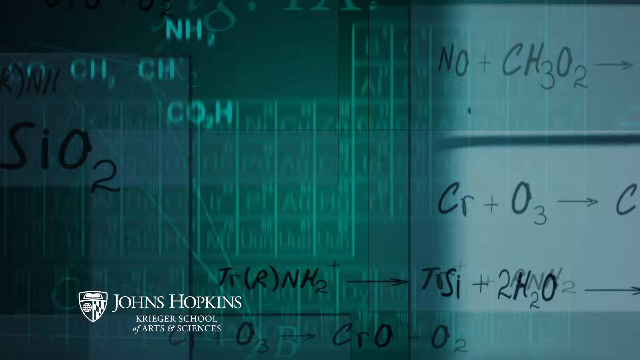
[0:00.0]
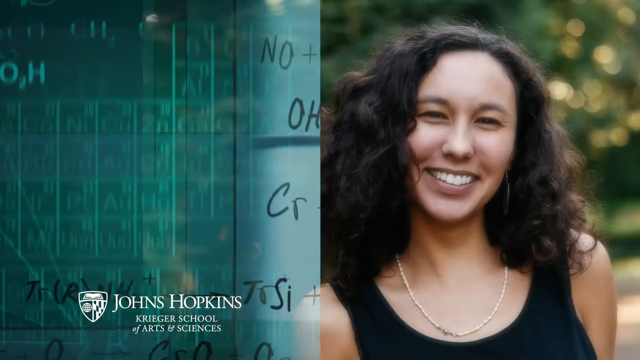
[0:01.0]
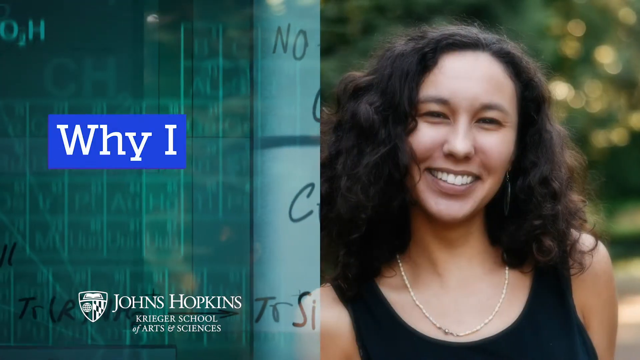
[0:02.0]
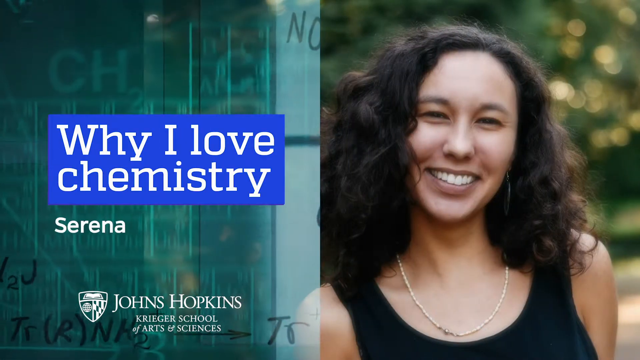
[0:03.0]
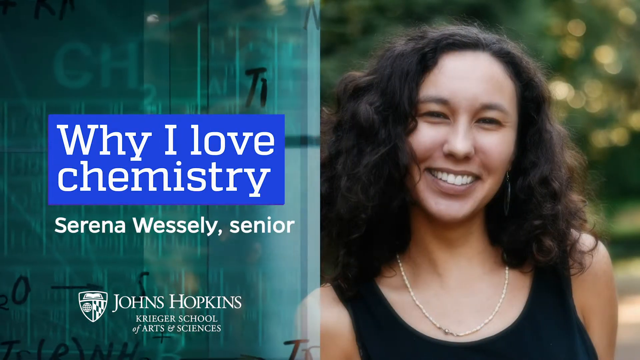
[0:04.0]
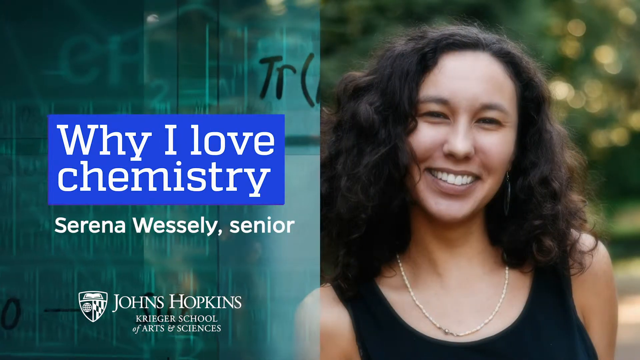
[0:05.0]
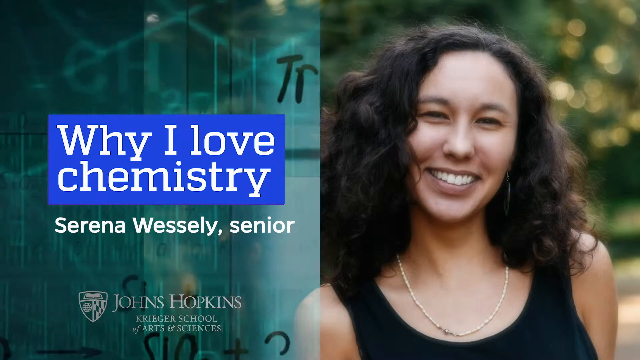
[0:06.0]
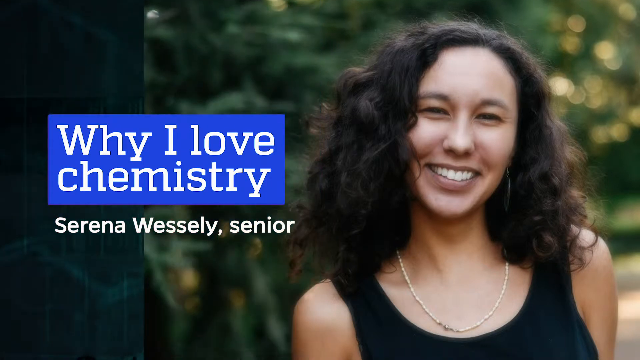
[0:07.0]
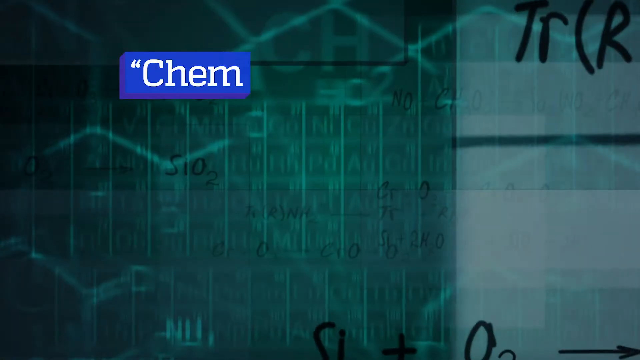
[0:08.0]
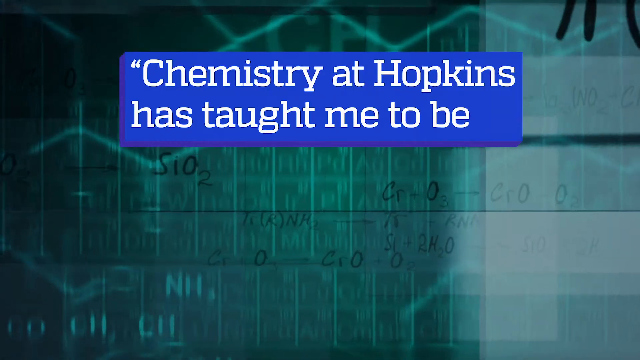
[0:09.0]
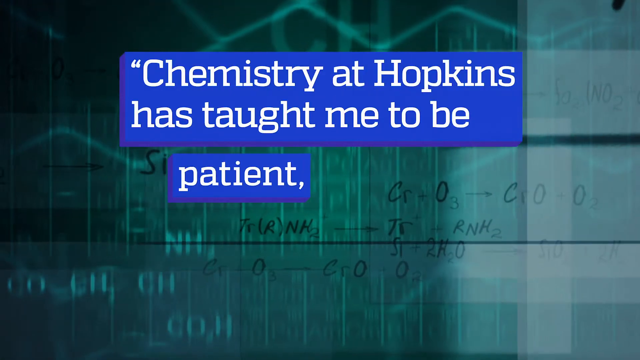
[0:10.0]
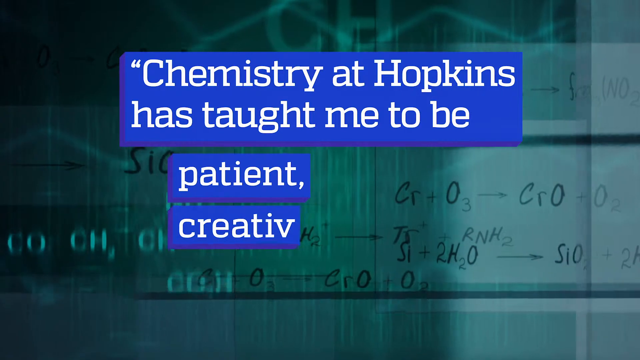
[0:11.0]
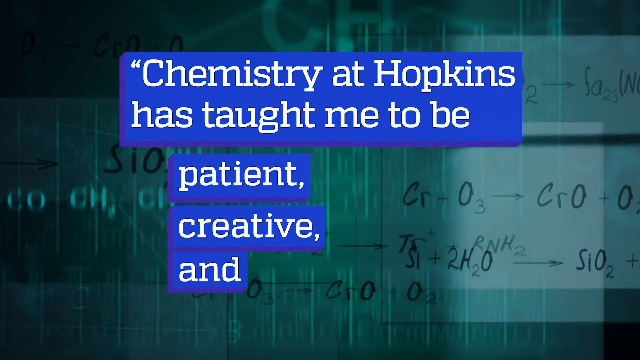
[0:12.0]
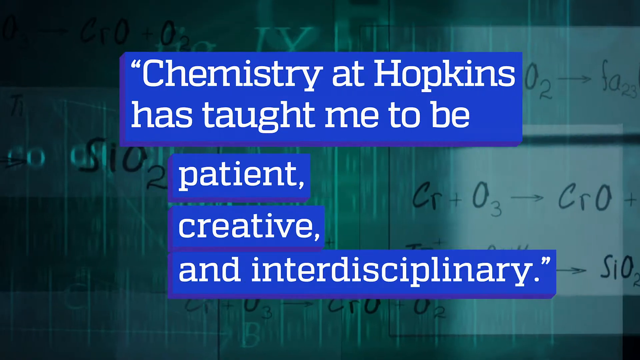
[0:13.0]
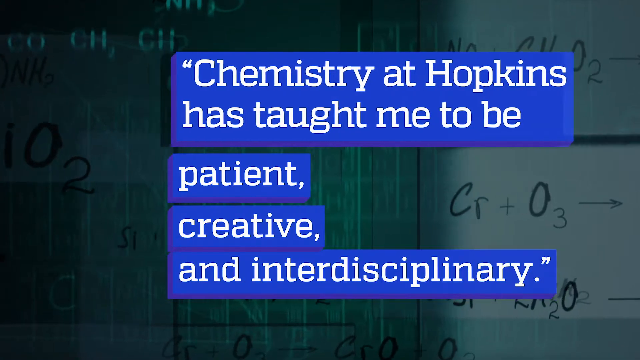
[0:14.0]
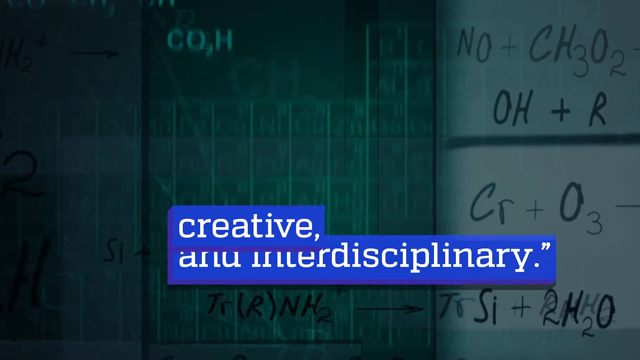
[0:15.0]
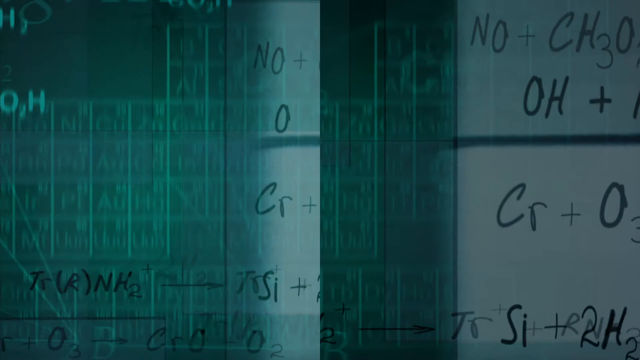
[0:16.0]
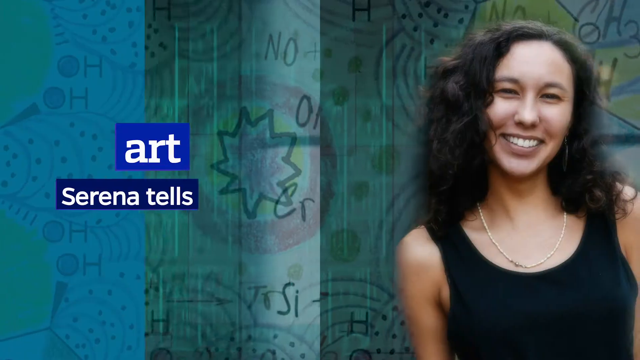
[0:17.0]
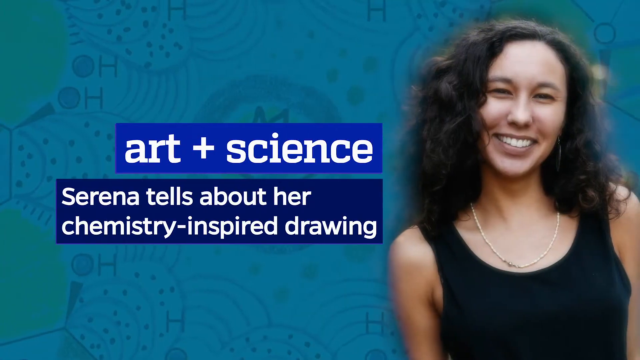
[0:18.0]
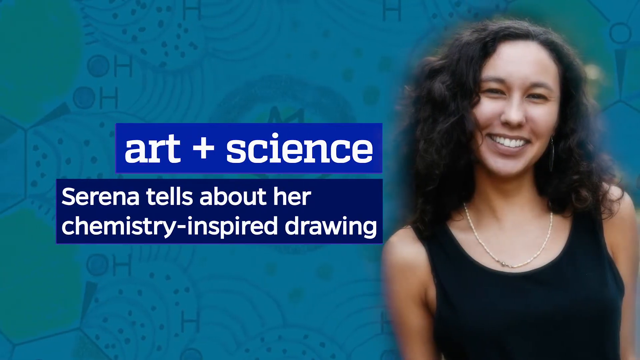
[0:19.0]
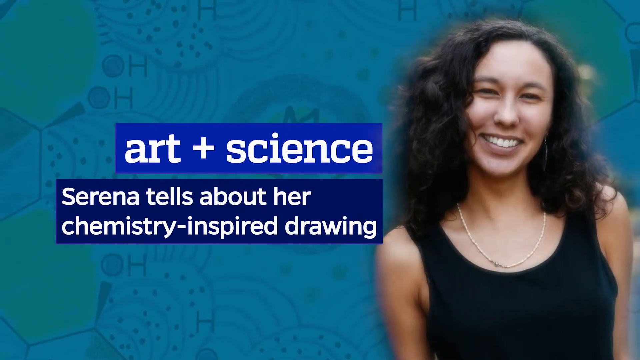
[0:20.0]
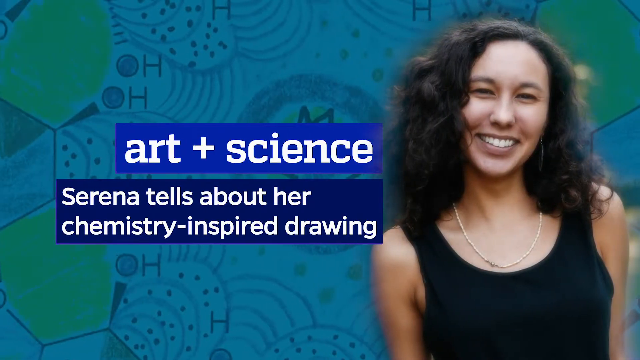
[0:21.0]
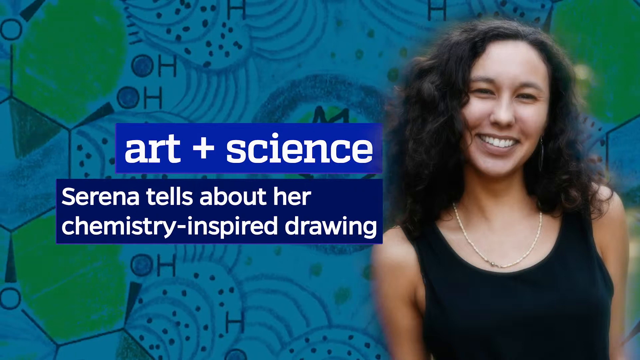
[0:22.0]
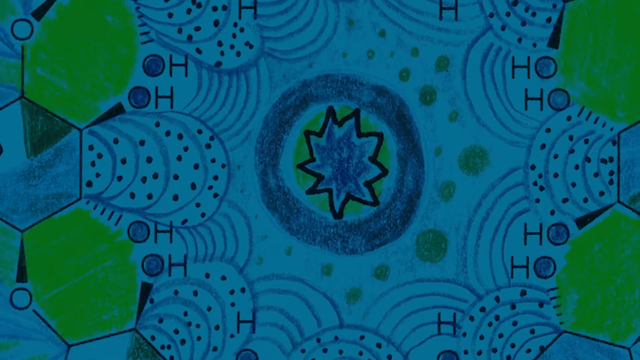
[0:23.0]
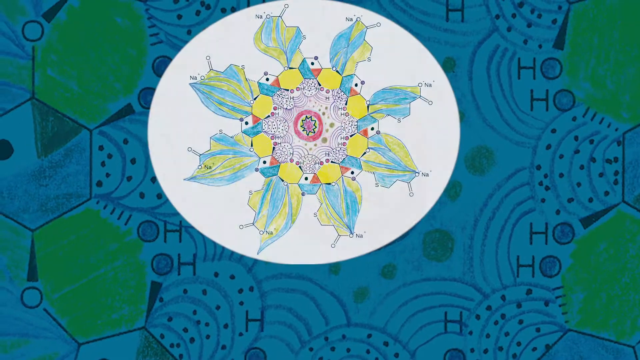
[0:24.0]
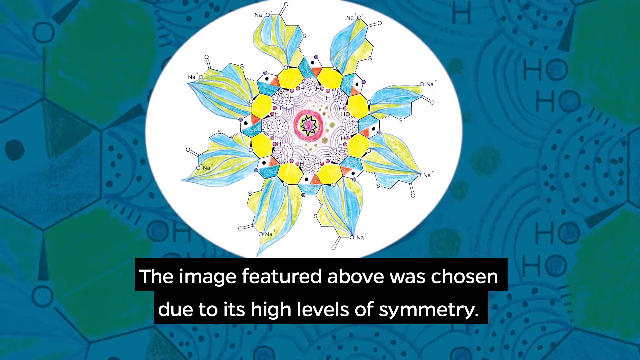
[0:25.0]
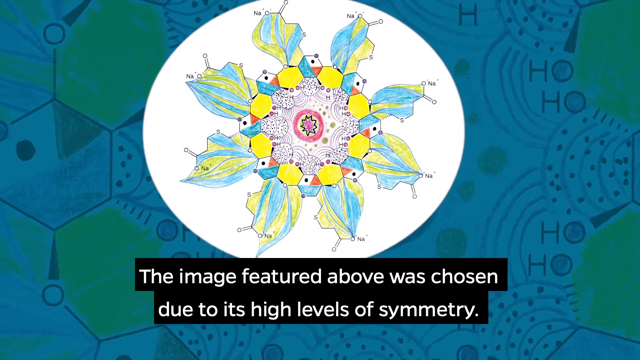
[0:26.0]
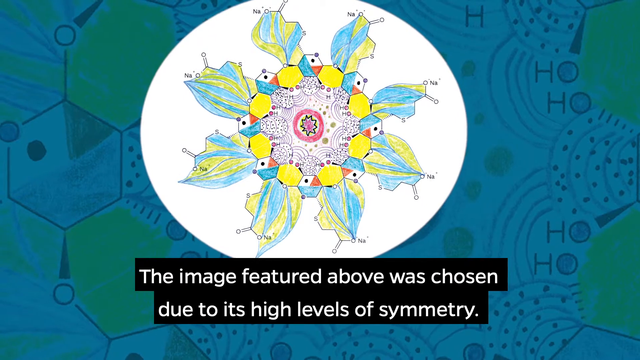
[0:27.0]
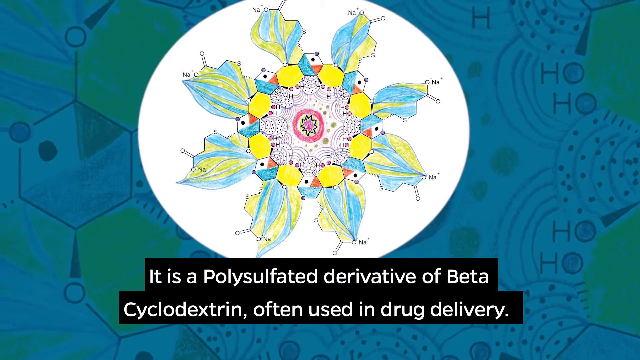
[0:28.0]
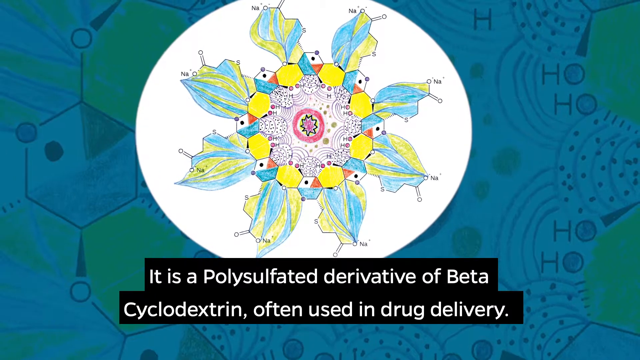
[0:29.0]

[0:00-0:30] The video opens with sliding graphics and images moving across to the right of the screen. On the right is a head-and-shoulders shot of a smiling young woman with brown skin and dark brown hair, wearing a black t-shirt. On the left side of the screen is a green graphic of shifting chemical formulas and a blue box where the text 'why I love chemistry' appears. Underneath it is the name 'Serena Wesseley, senior', and below that is the logo for 'John Hopkins Krieger School of Arts and Sciences'. The green graphic of shifting chemical formulas fades and drops down to the bottom of the screen, and then a fuller-length shot of the girl appears before her image disappears up to the top of the screen. The computer-animated green background of chemical formulas moves around the screen again as blue boxes form with white text inside reading 'Chemistry at Hopkins has taught me to be patient, creative and interdisciplinary'. The text is divided across four boxes in total, and in the order in which the text appears, the boxes either slide off to the right of the screen, become transparent or vanish, or move up to the top of the screen and disappear. A cut-out image of the same girl appears on the right of the screen, drifting in slightly, as more blue boxes appear to her left against the animation of chemical formulas. The white writing inside these blue boxes says 'art and science Serena tells about her chemistry inspired drawing'. The video then cuts to an oval image in the centre of the screen containing a hand-drawn image of what appears to be a chemical formula, predominantly yellow and blue. Black boxes appear underneath with white writing that says 'the image featured above was chosen due to its high levels of symmetry. It is a polysulfated derivative of beta cyclodextrin, often used in drug delivery'.